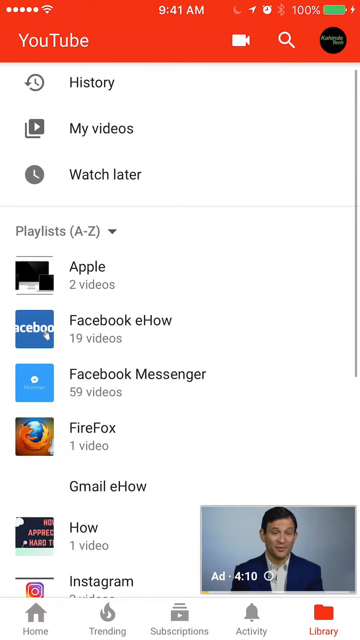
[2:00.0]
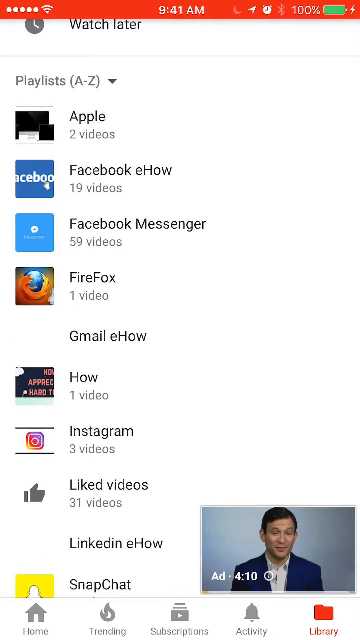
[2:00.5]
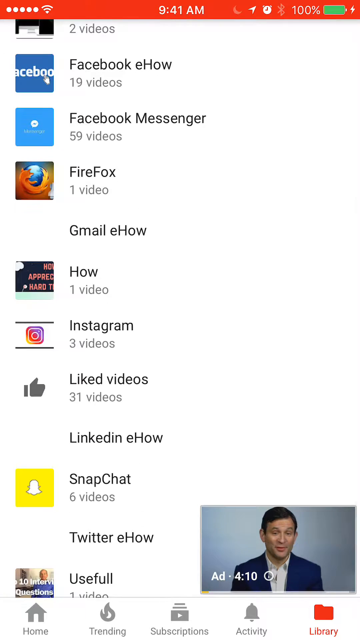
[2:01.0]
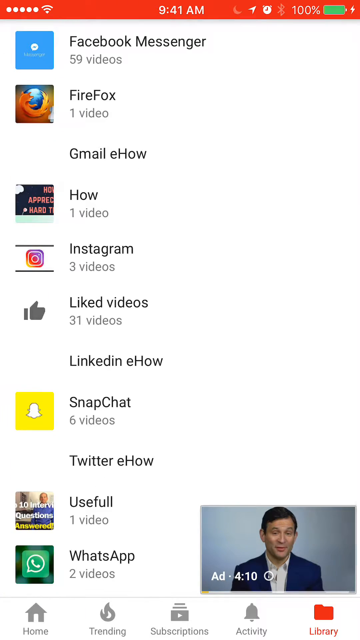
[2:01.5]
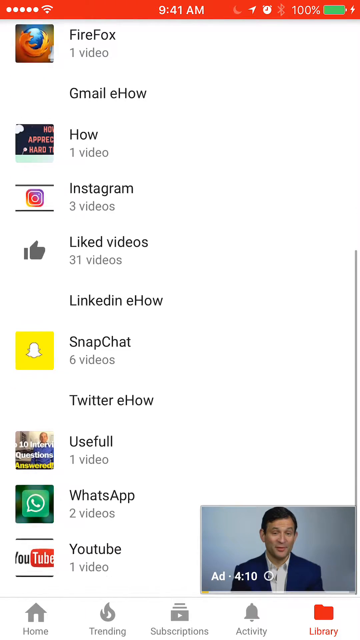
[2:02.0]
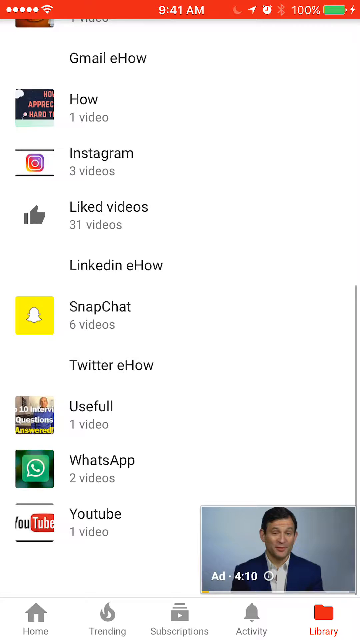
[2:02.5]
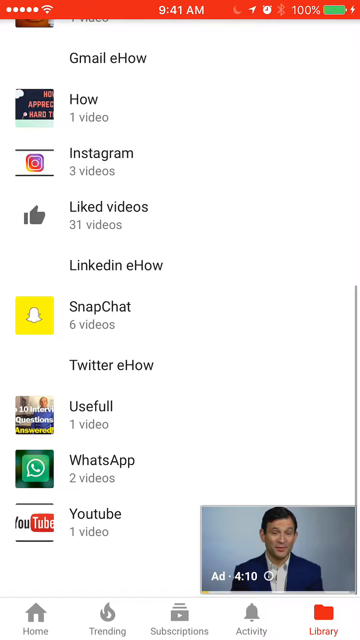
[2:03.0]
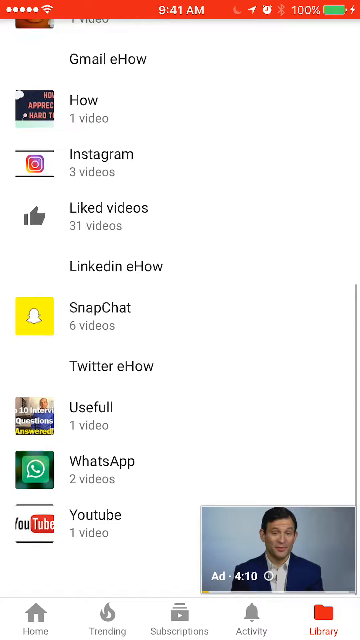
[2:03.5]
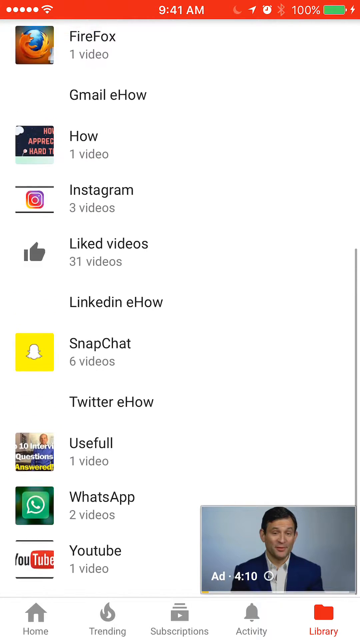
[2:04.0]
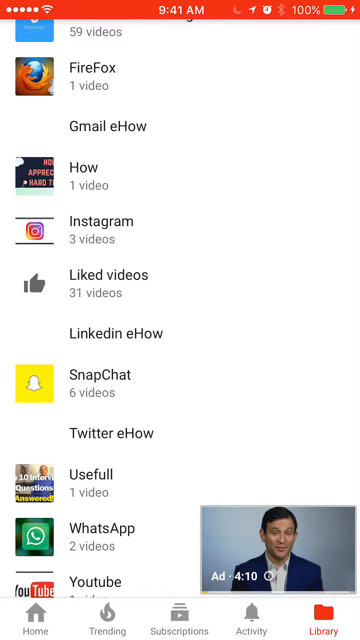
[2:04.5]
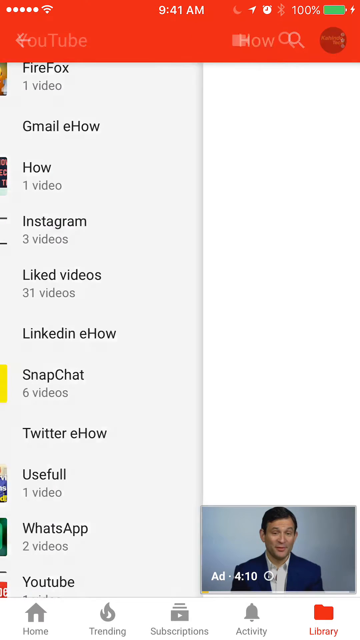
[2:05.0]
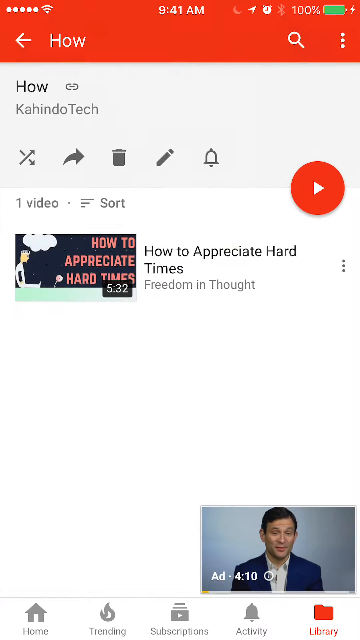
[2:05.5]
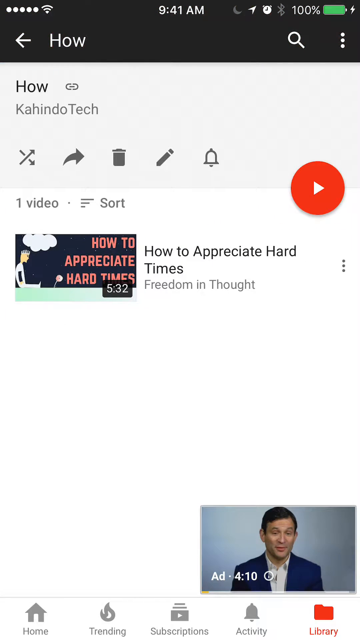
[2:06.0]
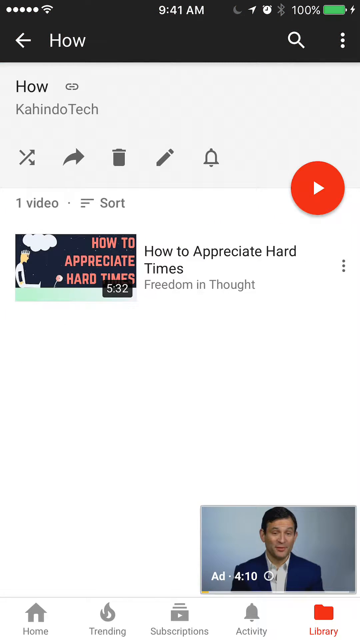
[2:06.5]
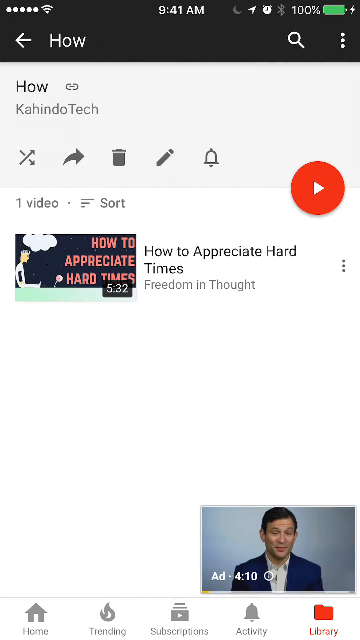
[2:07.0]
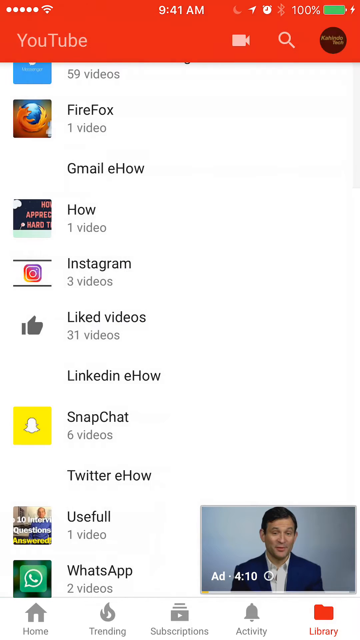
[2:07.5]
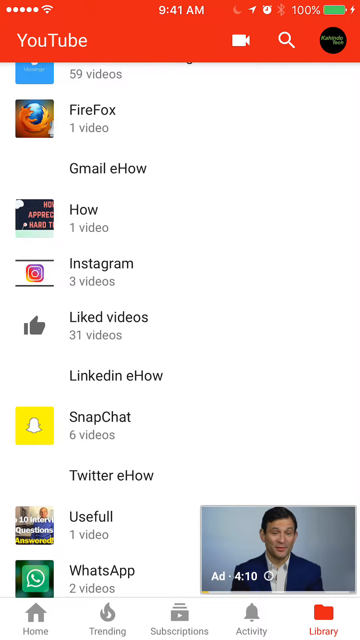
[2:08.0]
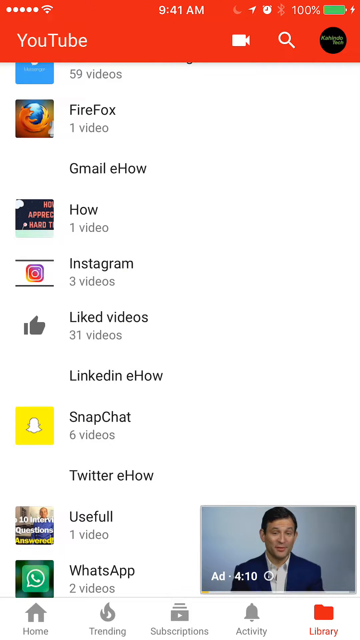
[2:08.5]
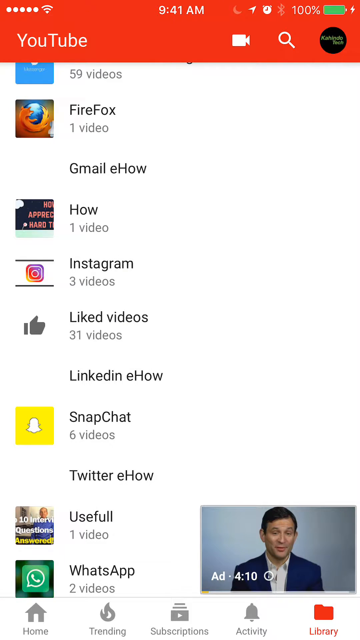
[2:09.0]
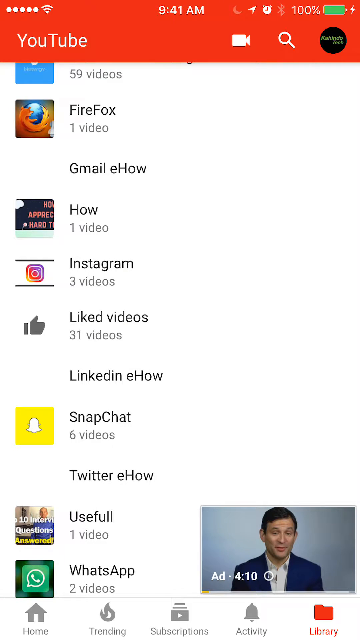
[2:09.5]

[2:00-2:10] The YouTube app is open on a mobile device at the library page of the user's account, showing menu options "history", "my videos" and "watch later", with a list of playlists underneath. There are many playlists the user has created, some titled "Apple", "Facebook eHow", "Facebook Messenger", "Firefox", "Gmail eHow", "How", "Instagram", "liked videos" and more. The user scrolls down to the bottom of the list, scrolls back up, and seems to click on the playlist titled "How". The app shows that playlist's page, which contains one video titled "How to Appreciate Hard Times". The user then goes back to the Library page with the list of all their created playlists.